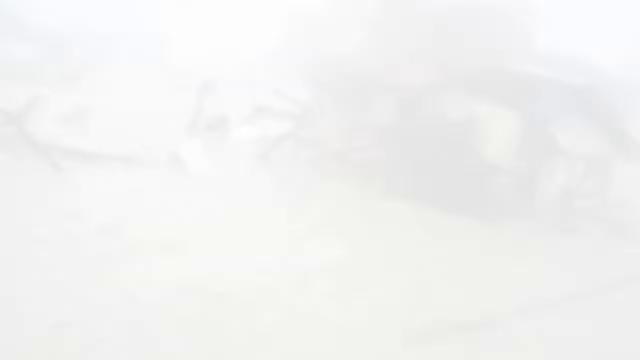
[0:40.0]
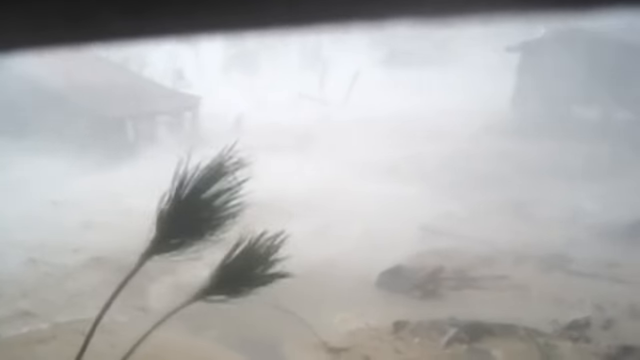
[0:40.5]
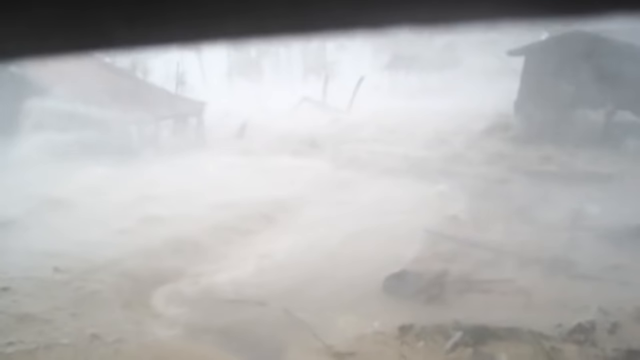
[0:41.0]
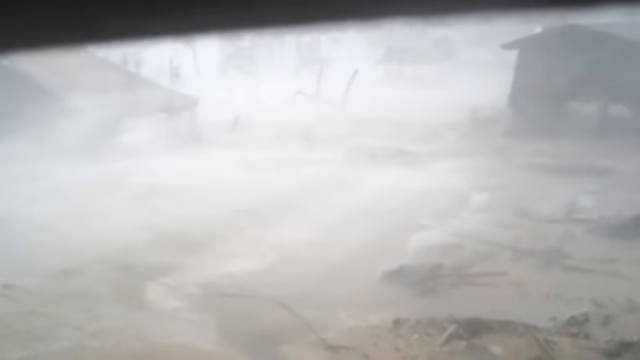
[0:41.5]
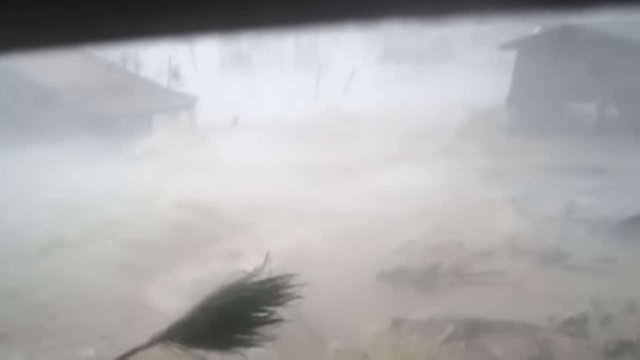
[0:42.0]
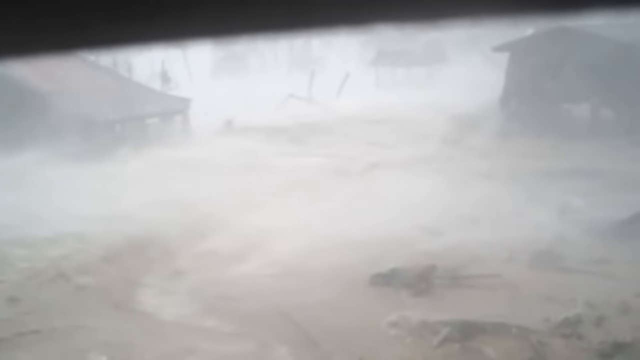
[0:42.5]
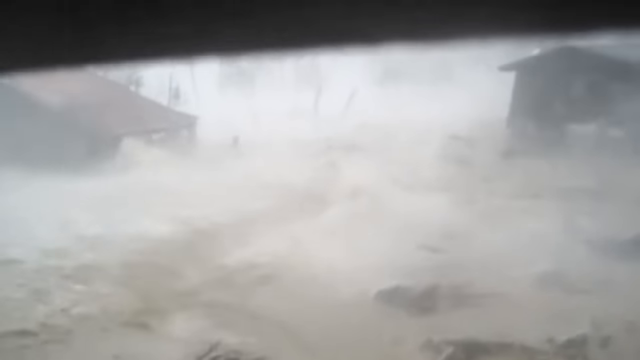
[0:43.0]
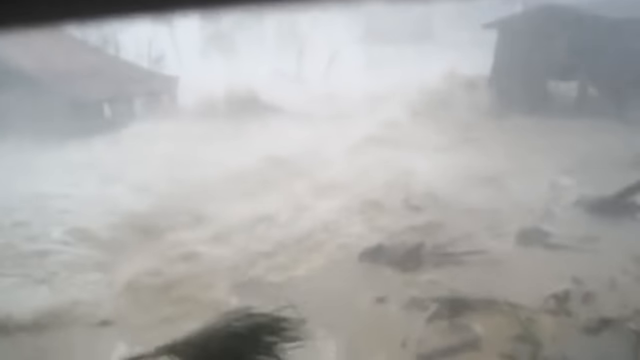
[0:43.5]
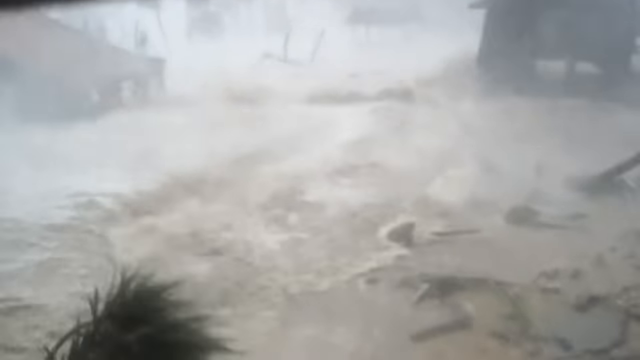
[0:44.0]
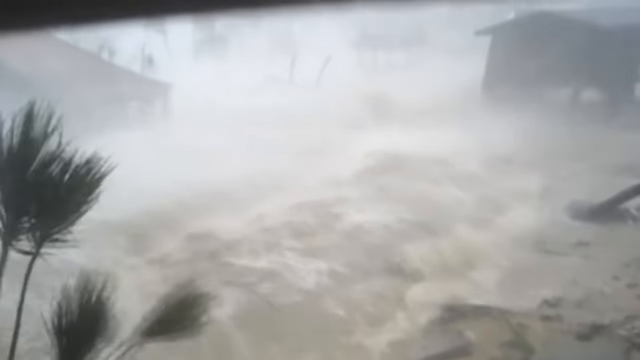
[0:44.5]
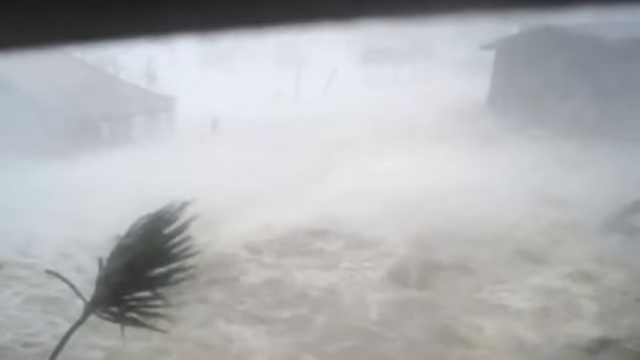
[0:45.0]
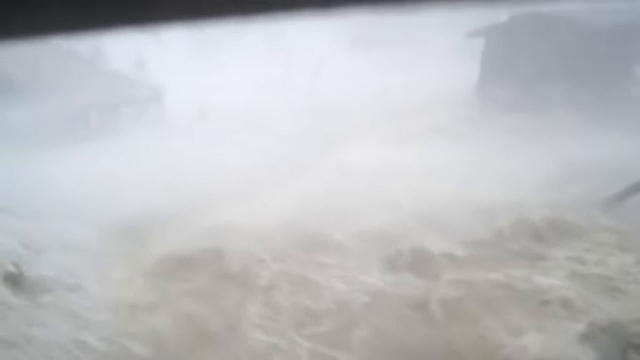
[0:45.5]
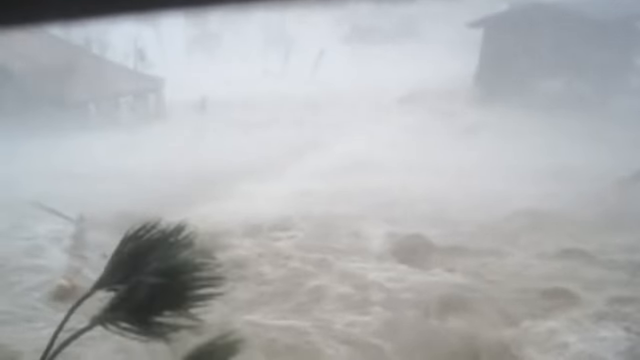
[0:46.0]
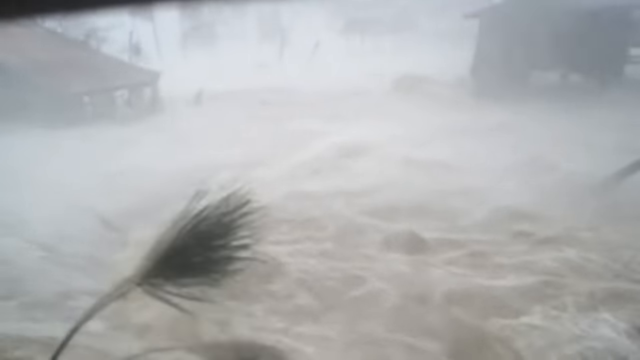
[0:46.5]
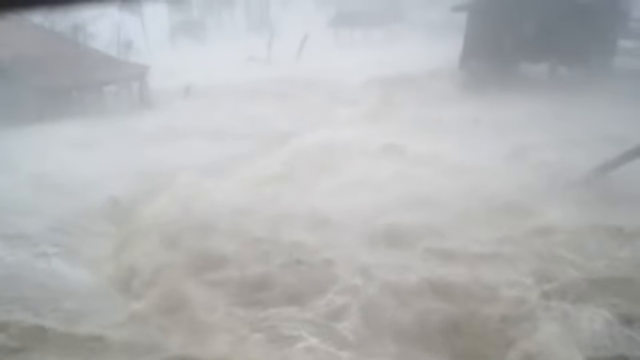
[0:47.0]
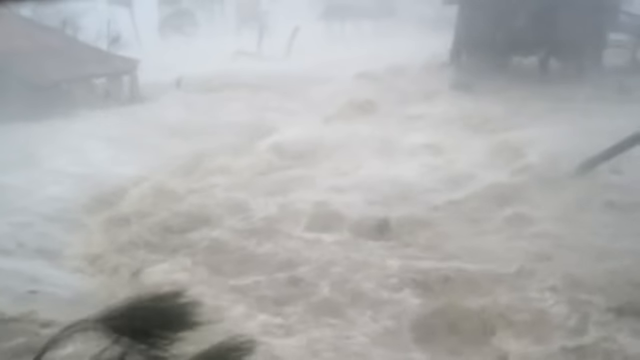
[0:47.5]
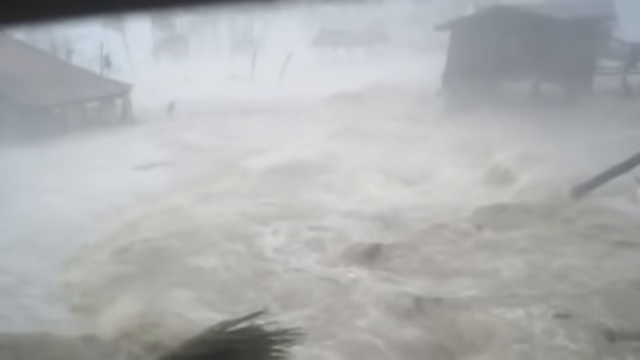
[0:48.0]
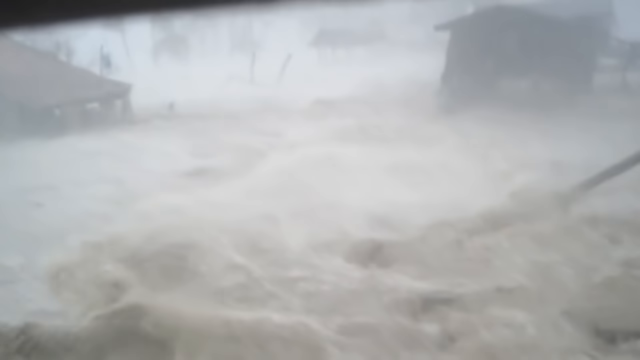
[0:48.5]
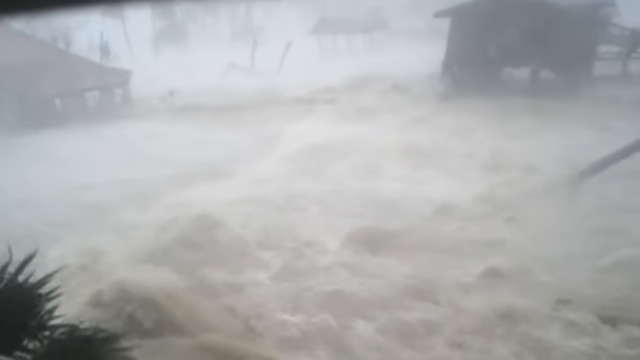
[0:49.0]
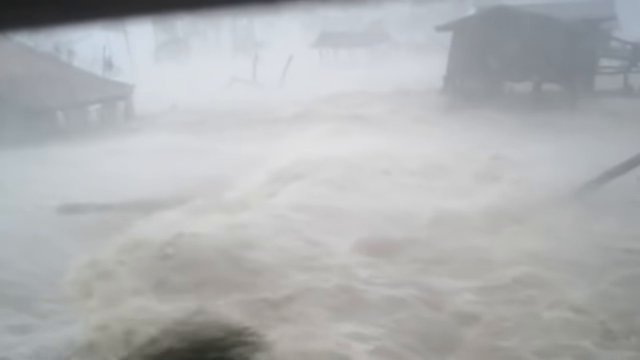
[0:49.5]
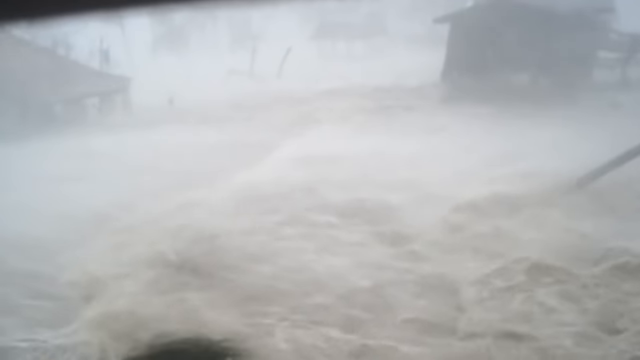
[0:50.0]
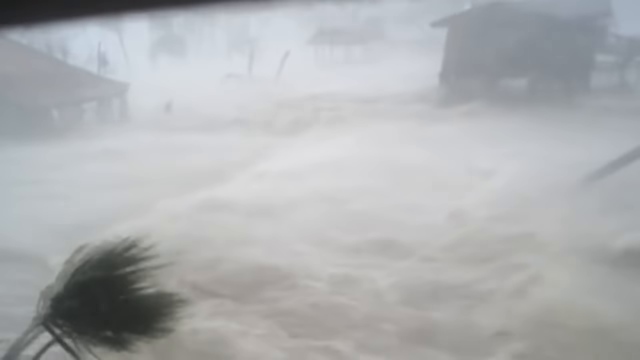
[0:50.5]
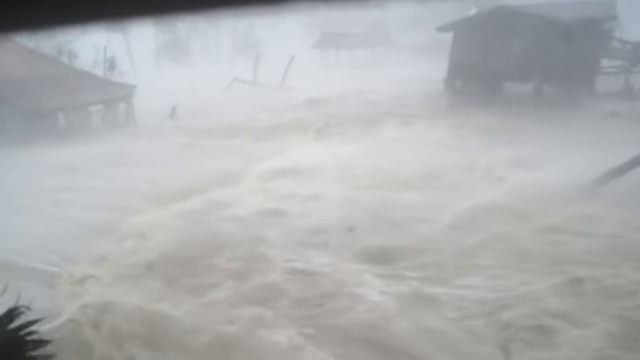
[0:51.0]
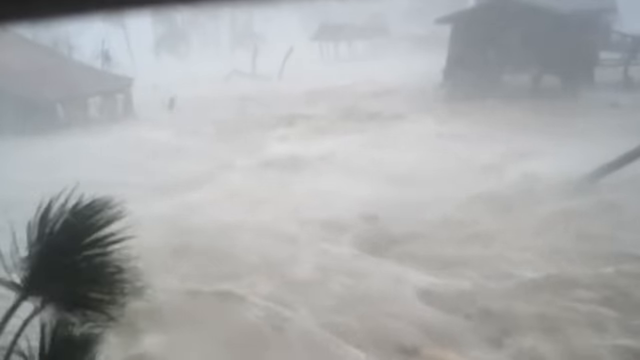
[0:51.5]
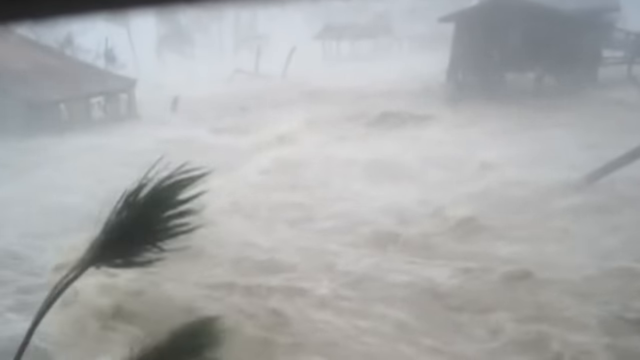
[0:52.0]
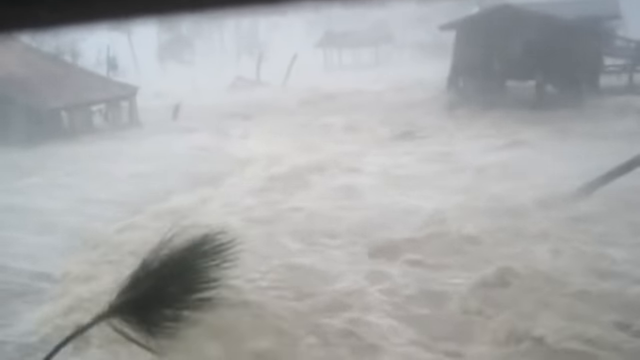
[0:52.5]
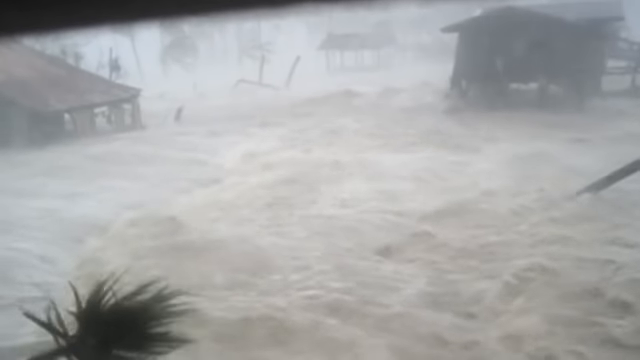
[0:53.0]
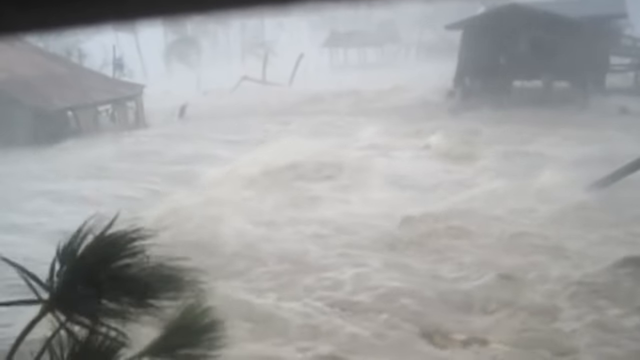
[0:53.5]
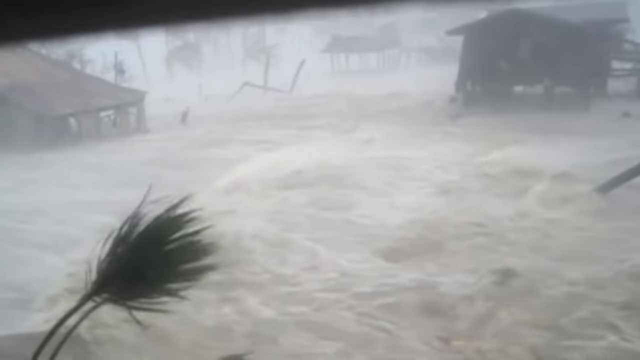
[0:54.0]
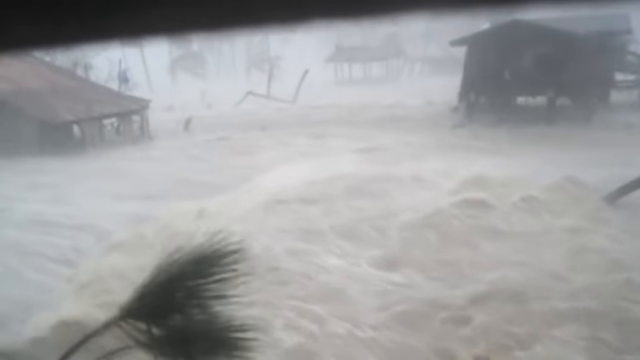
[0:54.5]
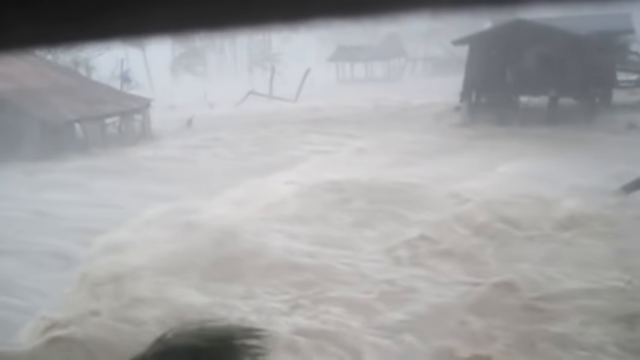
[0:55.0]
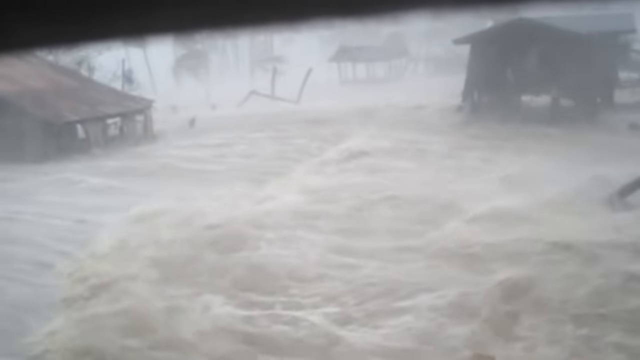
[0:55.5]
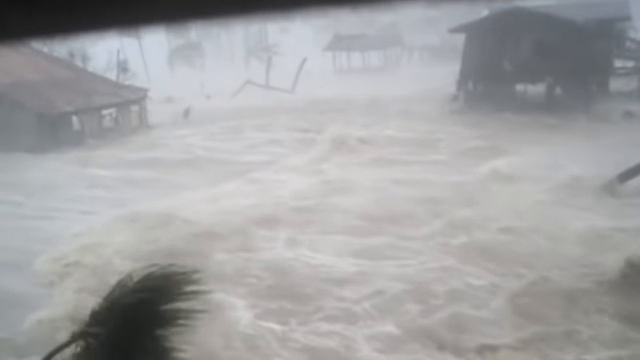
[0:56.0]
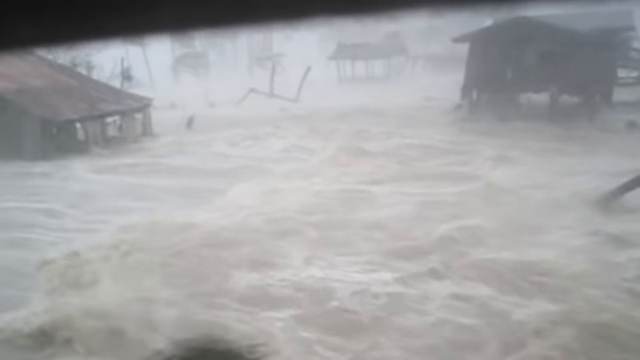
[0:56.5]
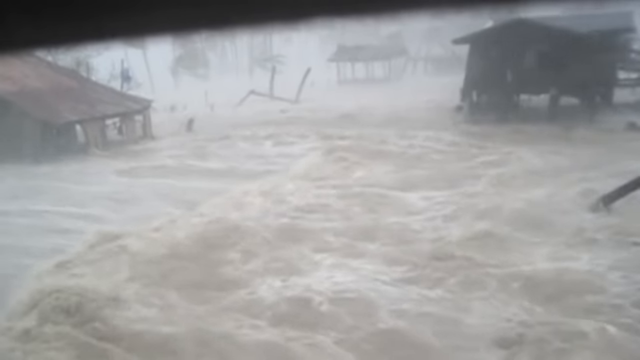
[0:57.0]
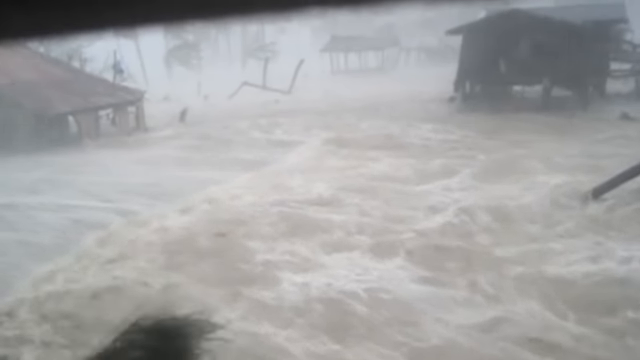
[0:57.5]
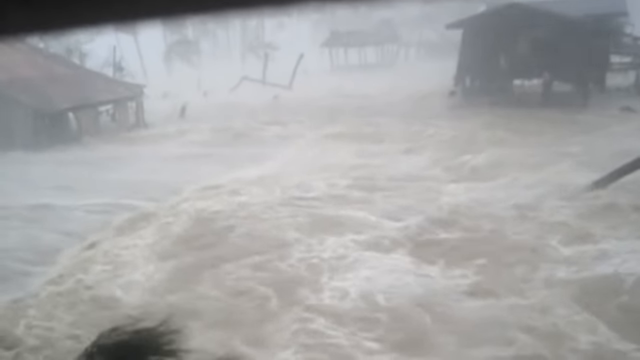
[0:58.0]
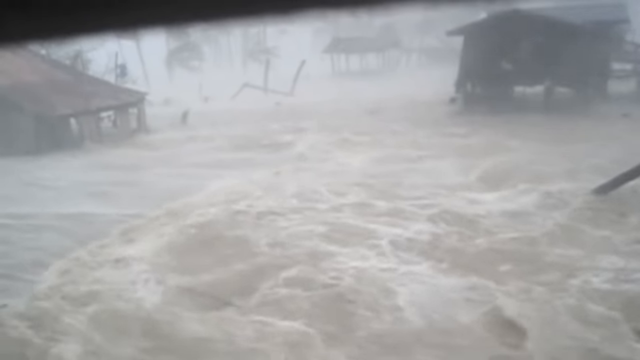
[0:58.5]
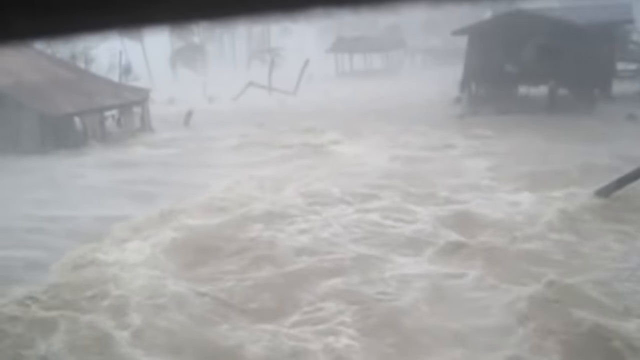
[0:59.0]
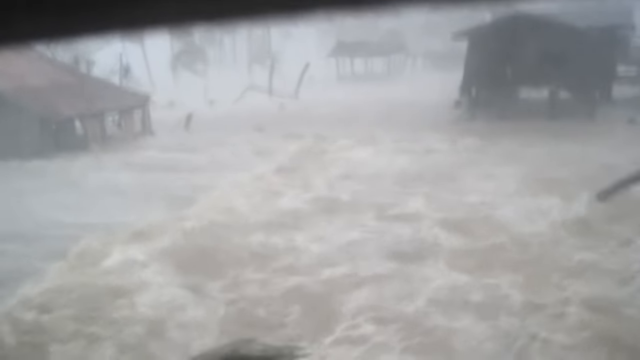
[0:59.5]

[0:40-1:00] More trees appear behind the buildings. The place looks like it was nicely built and decorated, but it is destroyed by the water. Many trees are falling, and some are just barely holding on. The wind keeps blowing and its speed seems to be increasing. Water is all over. A house that looks much bigger than the earlier ones is also destroyed, literally underwater, and has maroon roofing. In the distance, something that looks like a summer house is destroyed too. The water has very angry waves.